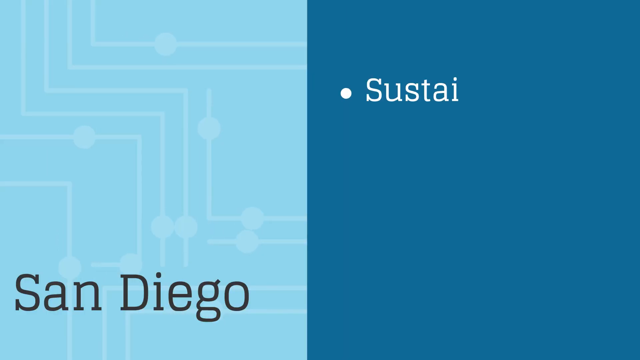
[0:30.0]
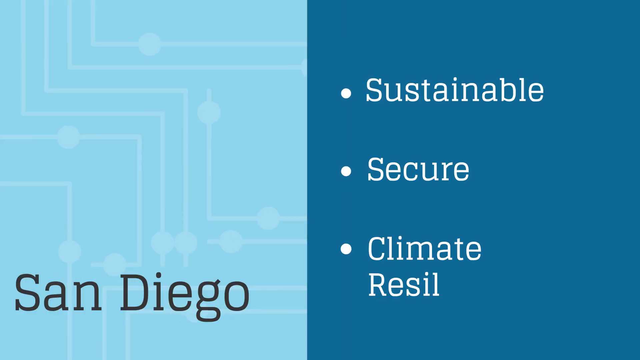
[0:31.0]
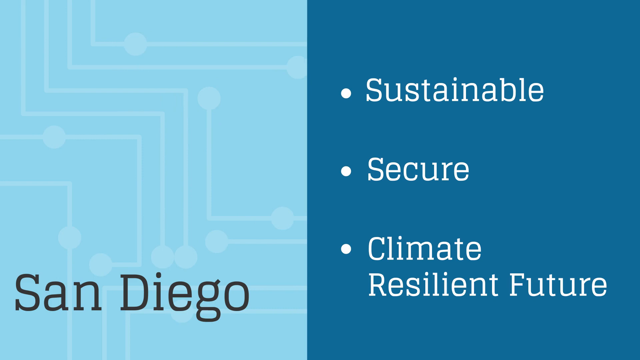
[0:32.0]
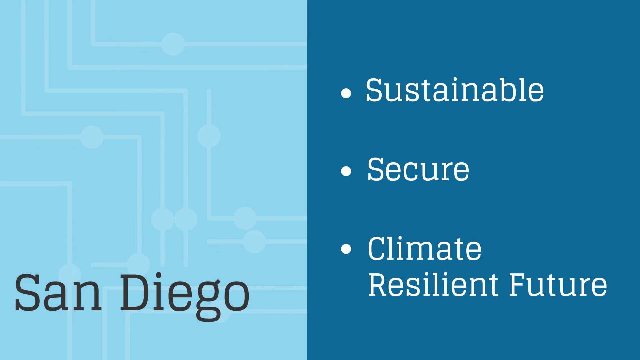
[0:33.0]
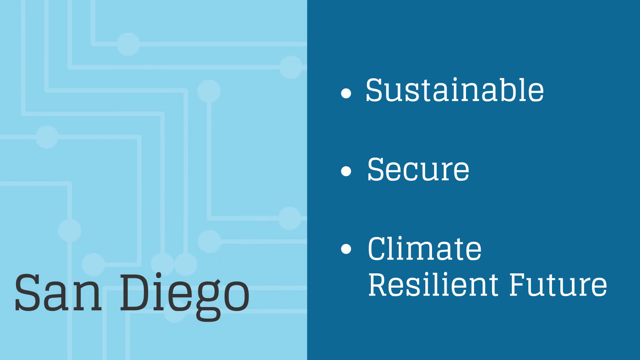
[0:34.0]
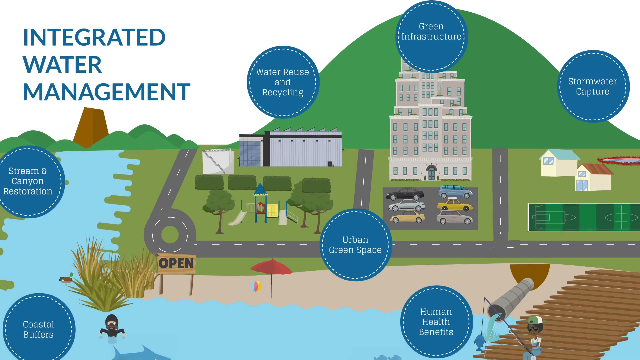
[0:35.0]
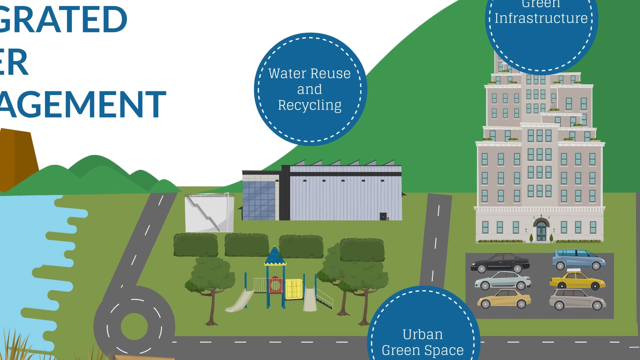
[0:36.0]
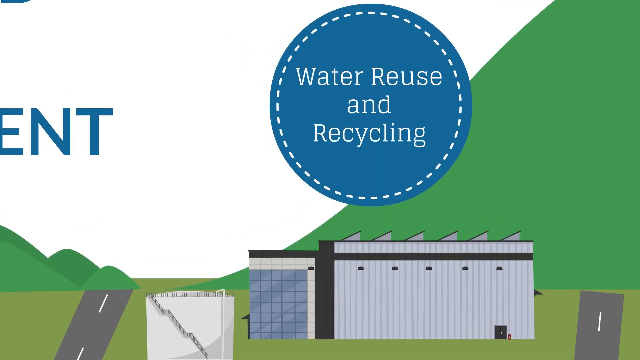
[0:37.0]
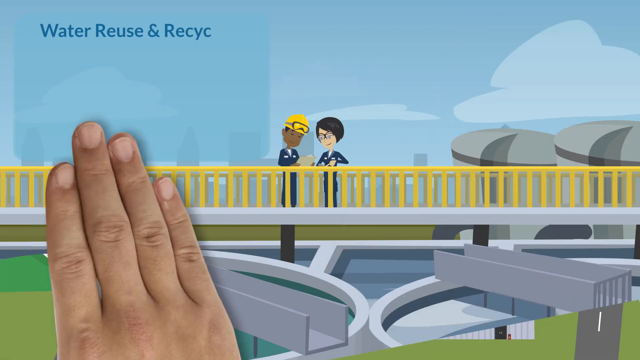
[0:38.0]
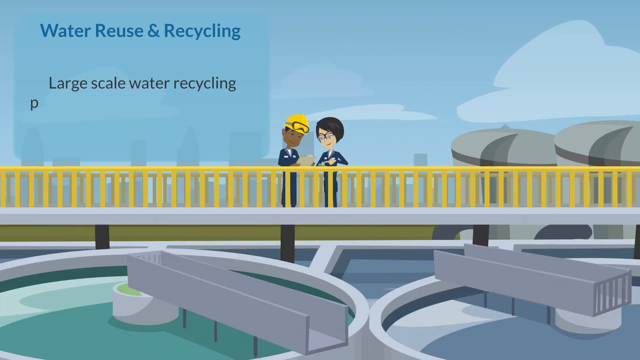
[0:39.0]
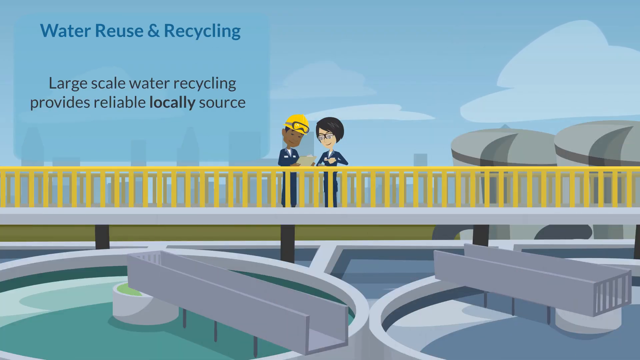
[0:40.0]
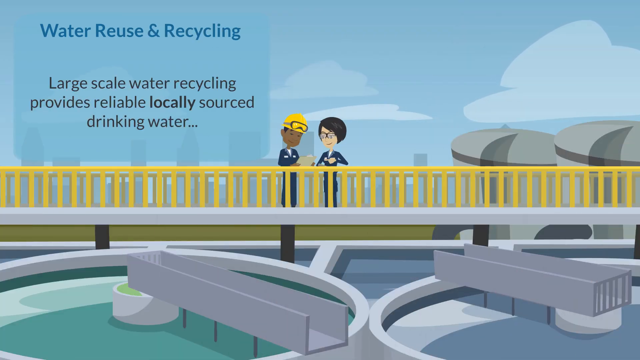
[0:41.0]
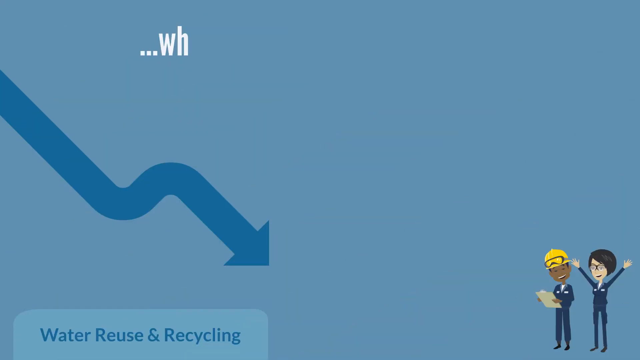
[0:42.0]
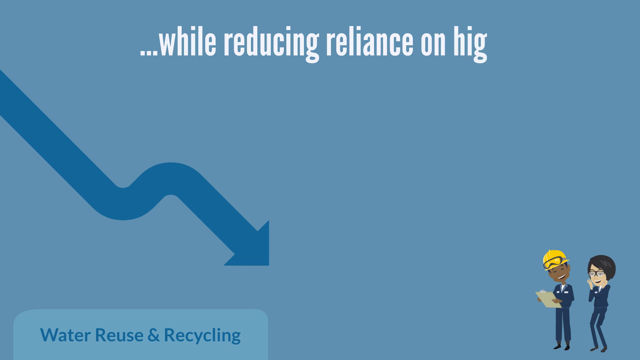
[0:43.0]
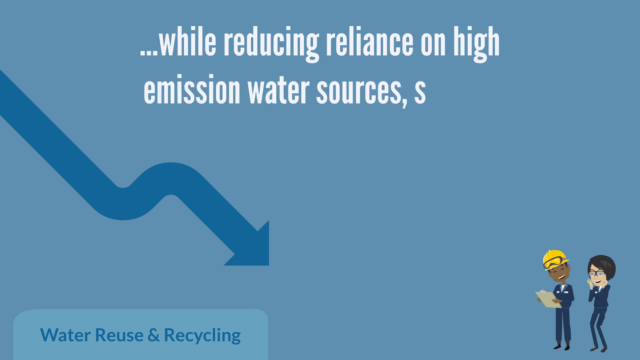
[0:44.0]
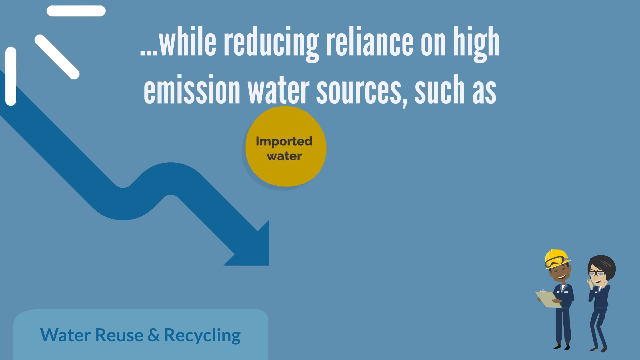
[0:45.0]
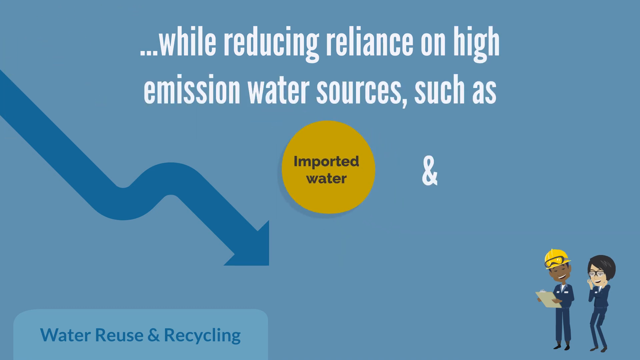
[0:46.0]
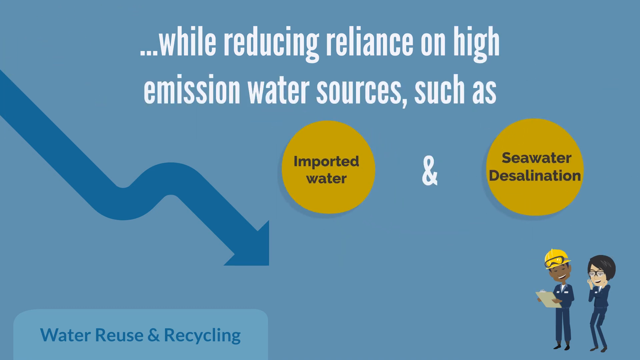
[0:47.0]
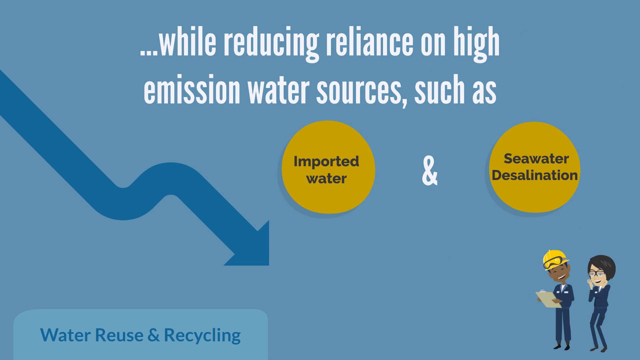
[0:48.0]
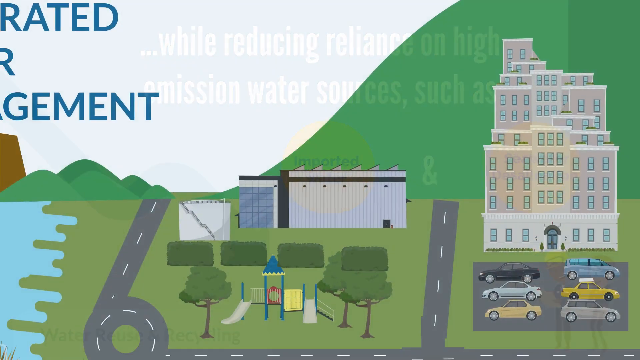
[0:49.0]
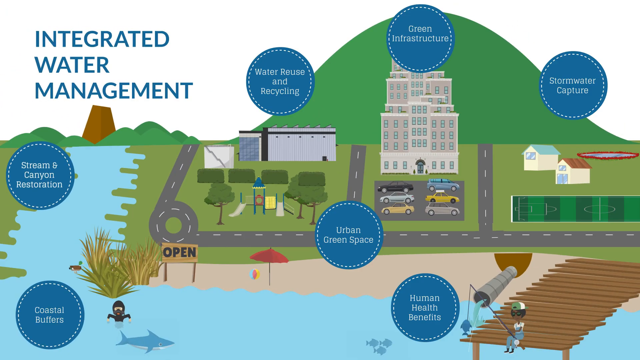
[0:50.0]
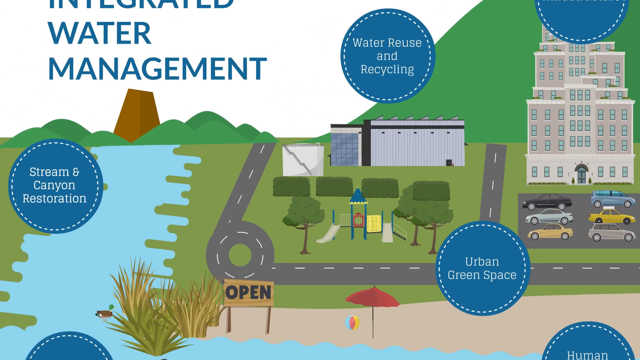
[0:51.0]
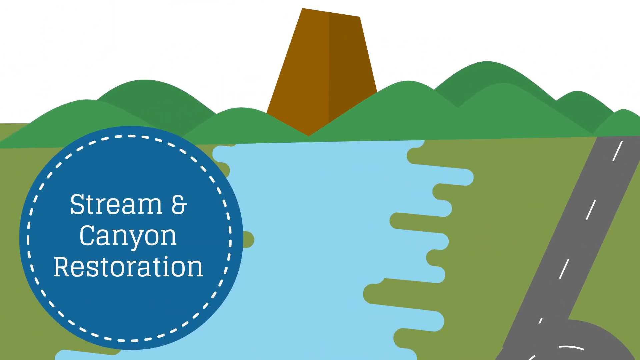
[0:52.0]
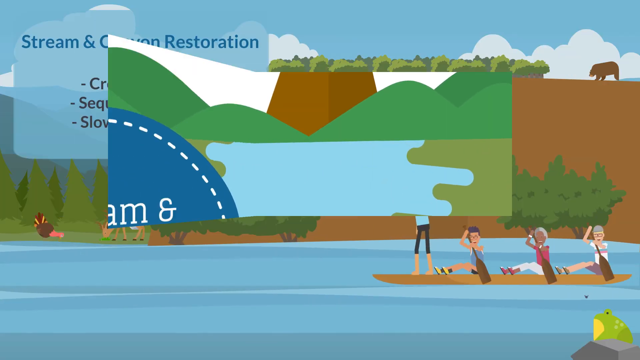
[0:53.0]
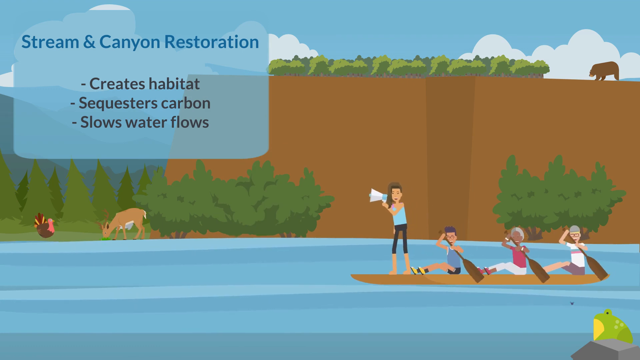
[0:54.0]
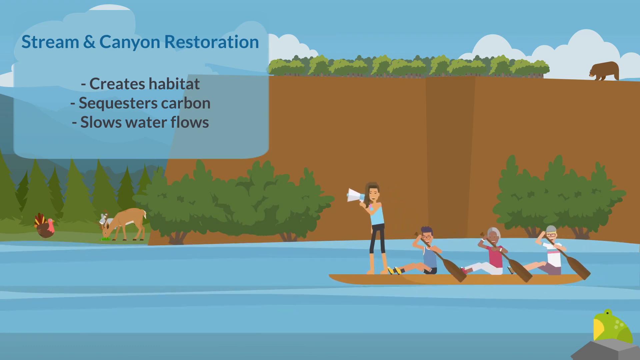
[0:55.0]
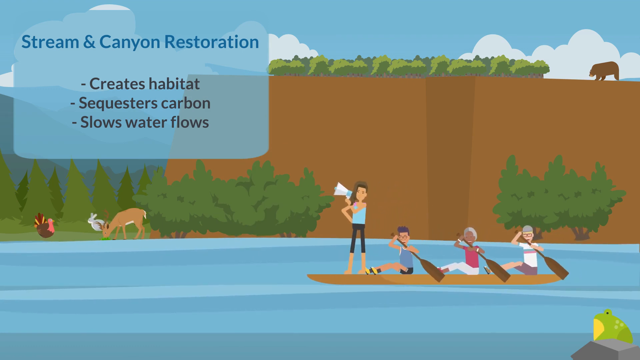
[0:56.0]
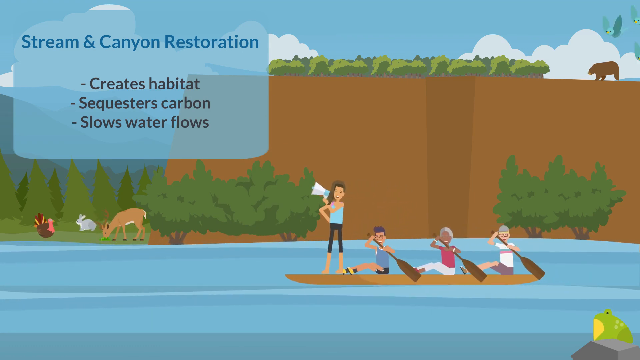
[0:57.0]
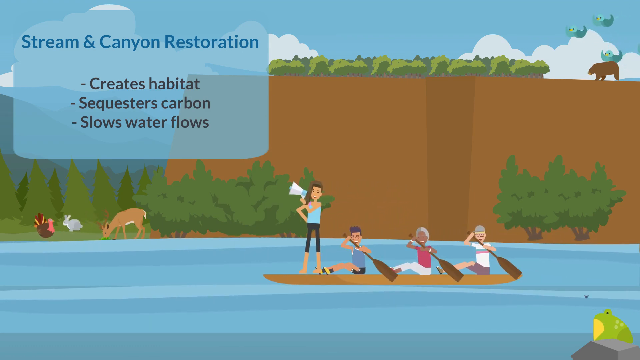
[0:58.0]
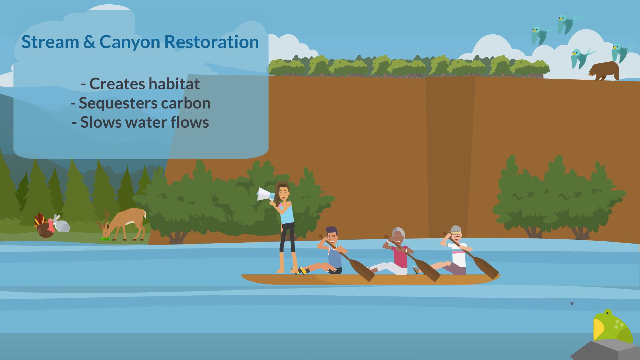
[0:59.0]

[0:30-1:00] Text reads "San Diego, Sustainable Secure Climate Resilient Future" and then "Water Reuse and Recycling," followed by "Large scale water recycling provides reliable locally sourced drinking water while reducing reliance on high emission water sources such as imported water and seawater desalination." Next comes "Stream and Canyon Restoration": people on a raft canoe down a long river. In the background is what appears to be a hill with some green shrubbery, something that looks like it may be a bear, and a sky with clouds and birds. On the side of the river there is a deer, what looks like a man, and some woods. In the top left-hand corner, text reads "stream and canyon restoration" and "creates habitat, sequesters carbon, slows water flows."